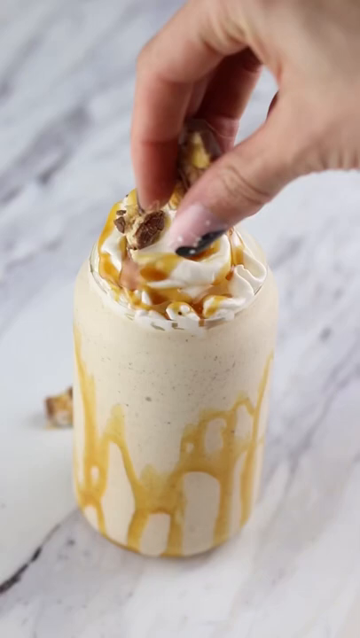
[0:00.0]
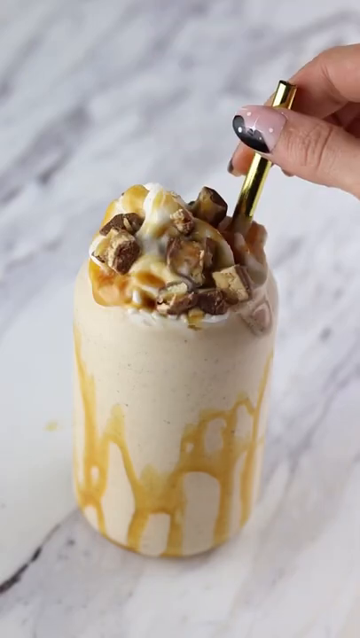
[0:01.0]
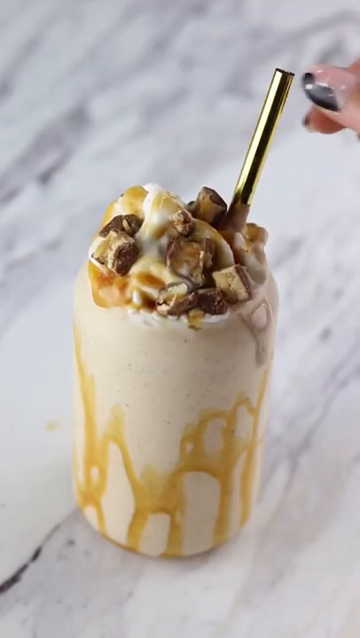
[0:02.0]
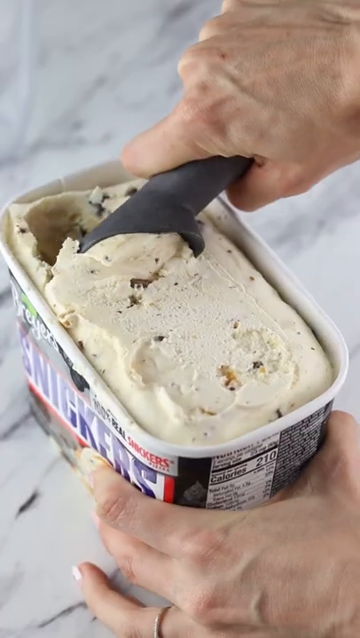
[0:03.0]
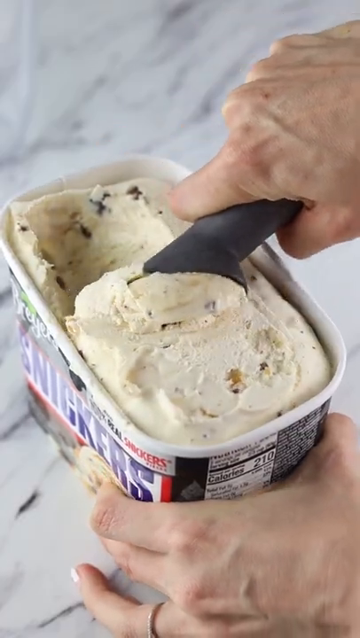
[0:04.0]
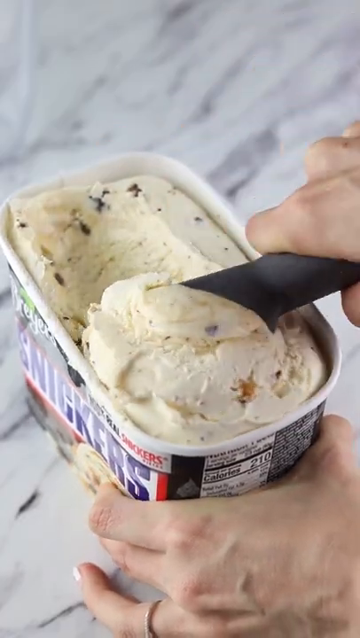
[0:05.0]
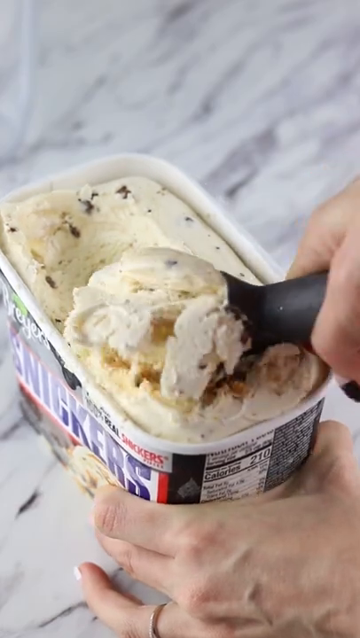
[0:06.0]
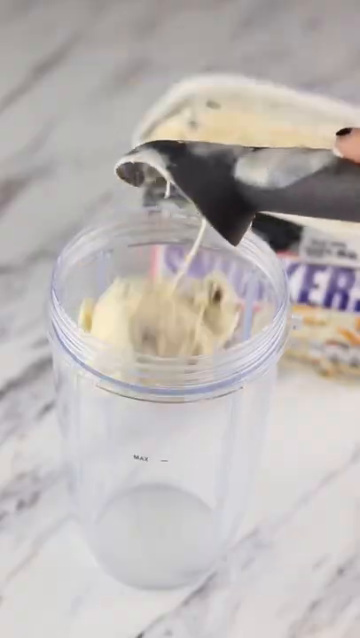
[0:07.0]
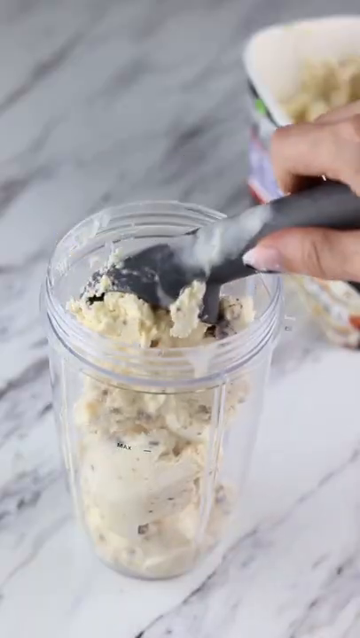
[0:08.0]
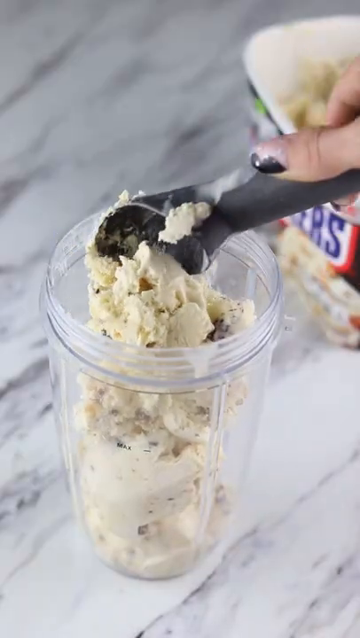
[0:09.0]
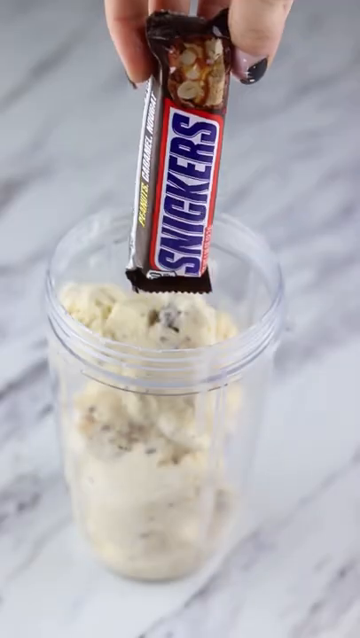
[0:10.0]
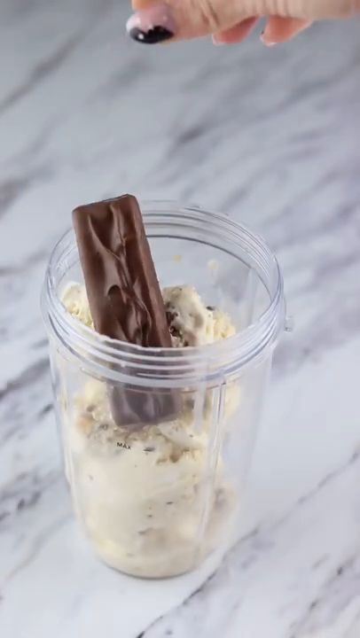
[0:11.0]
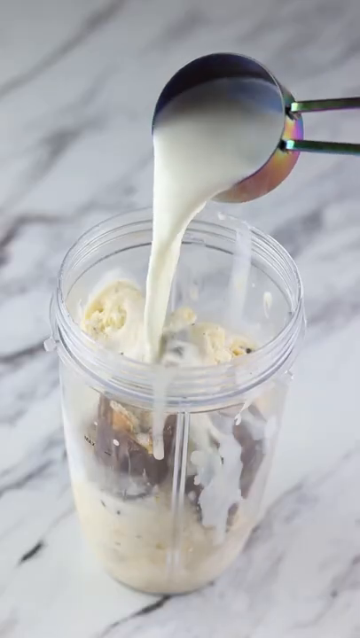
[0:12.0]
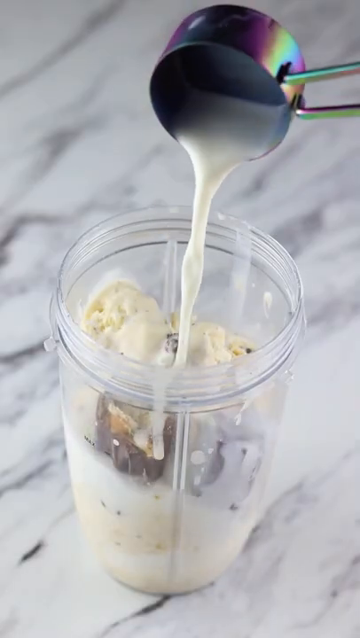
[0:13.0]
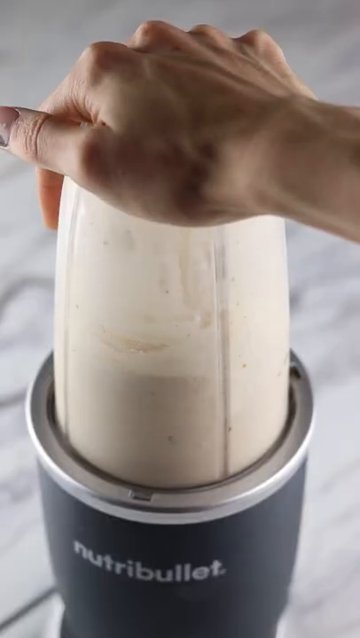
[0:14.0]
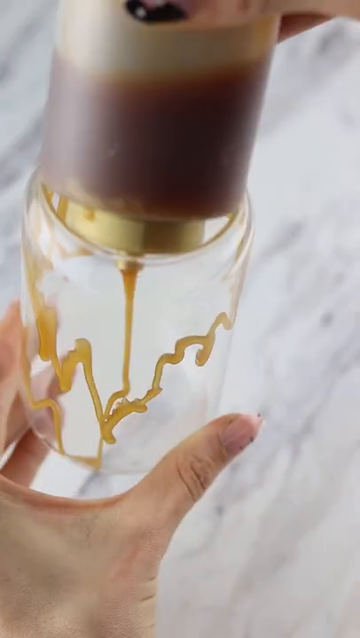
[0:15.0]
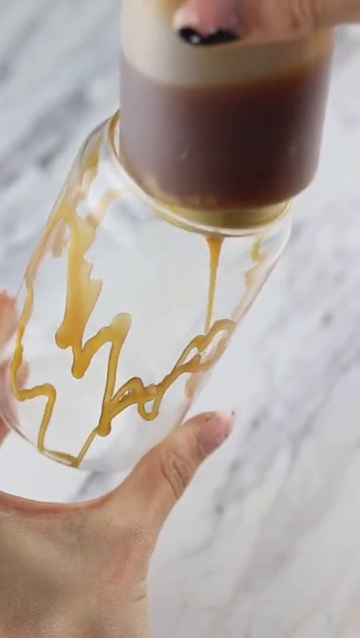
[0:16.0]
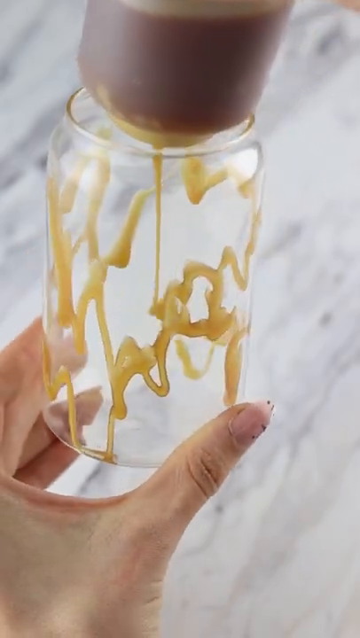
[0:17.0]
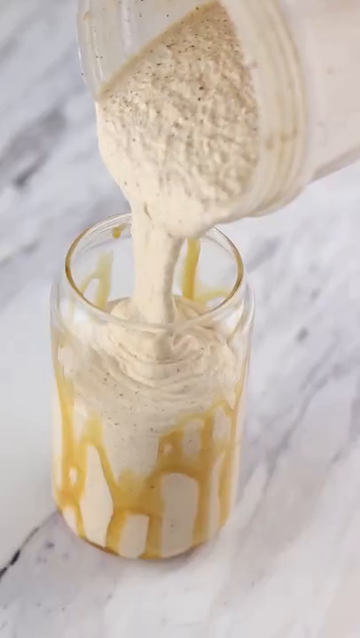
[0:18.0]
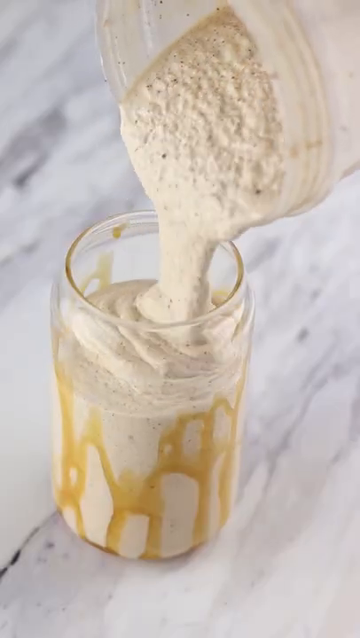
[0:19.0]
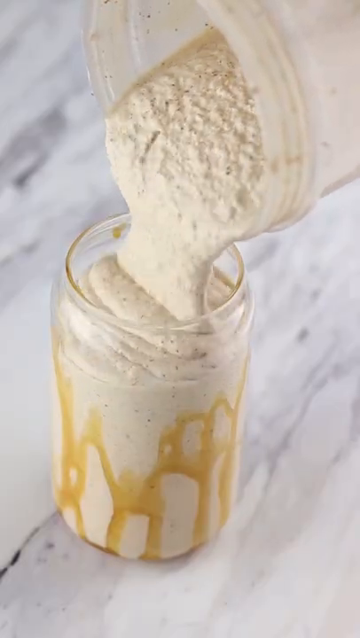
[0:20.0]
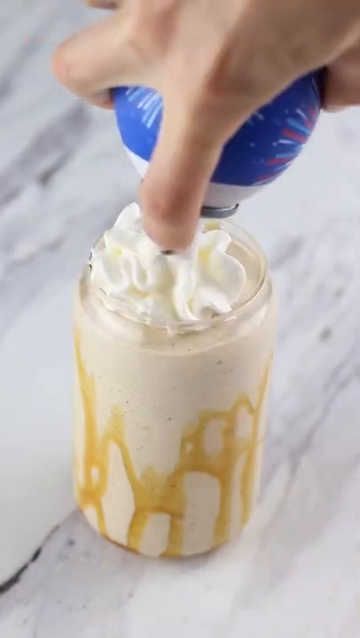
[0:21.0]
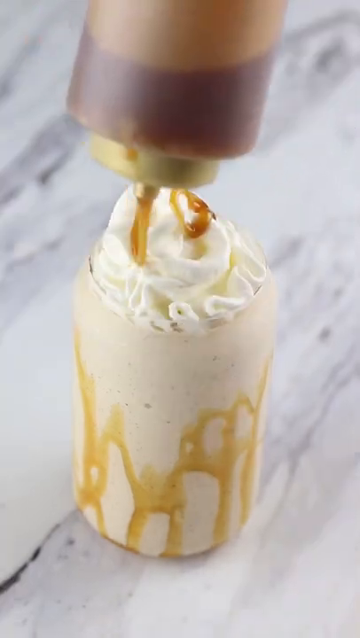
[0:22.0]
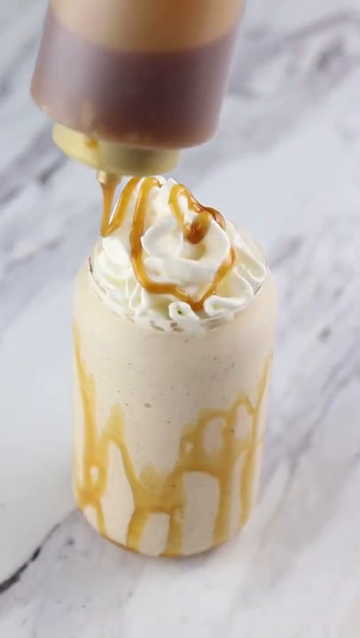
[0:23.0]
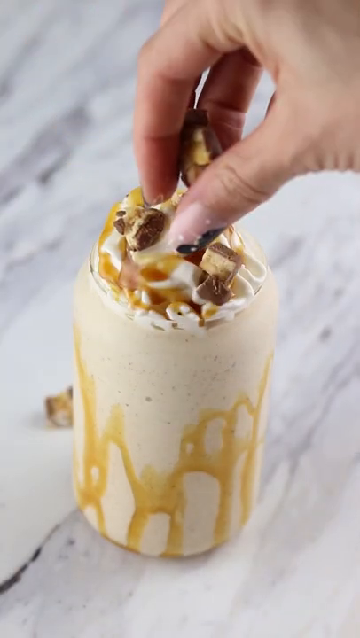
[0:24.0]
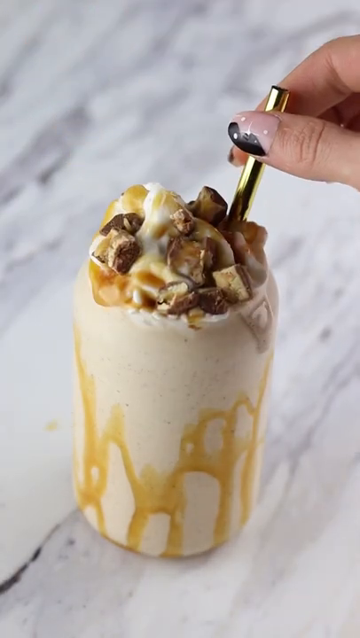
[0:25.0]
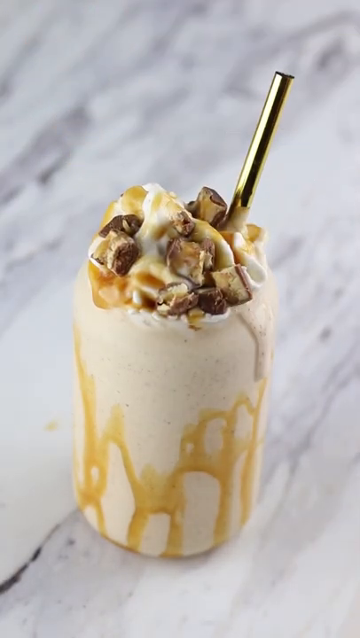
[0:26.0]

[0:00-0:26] Someone pours some milk into a blender cup that already holds other food items. Next comes a view of a completed cup of milkshake. The person then scoops ice cream out of a gallon tub of Snicker brand ice cream; the ice cream is vanilla colored with what look like flecks of chocolate chips. The person scoops the ice cream into the blender bowl and adds a whole Snicker chocolate bar to it. Using a metal measuring cup, the person pours a cup of milk into the blender bowl. The blending process follows. Finally, the person pours the shake into a cup and tops it with a squirt of whipped cream, some syrups, and what looks like more chocolate and chopped nuts.